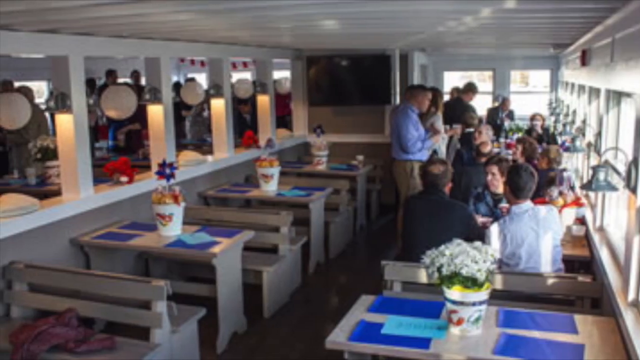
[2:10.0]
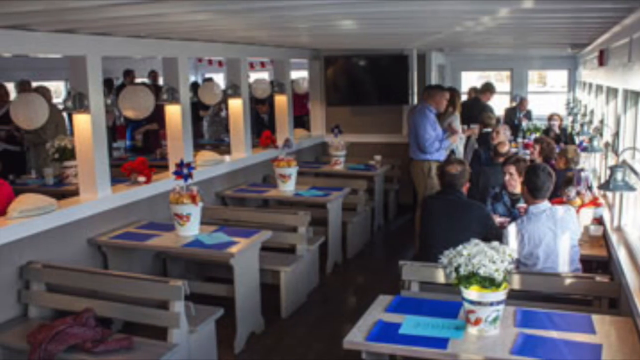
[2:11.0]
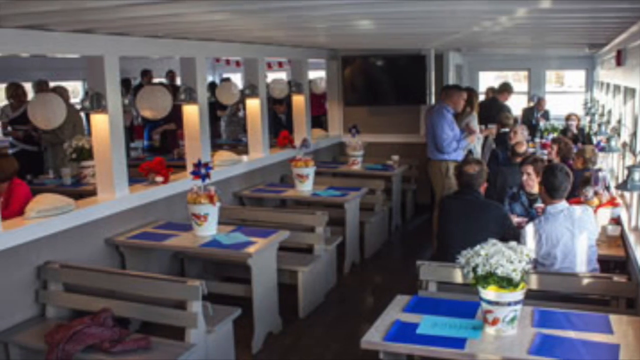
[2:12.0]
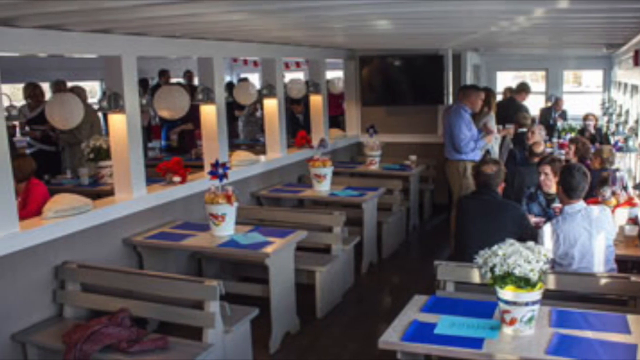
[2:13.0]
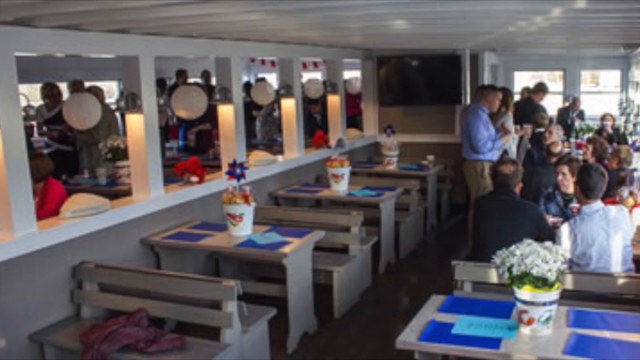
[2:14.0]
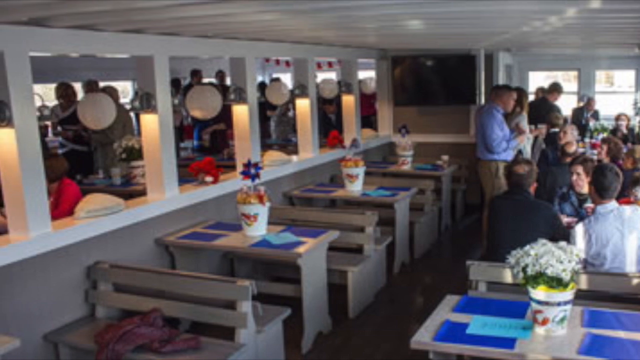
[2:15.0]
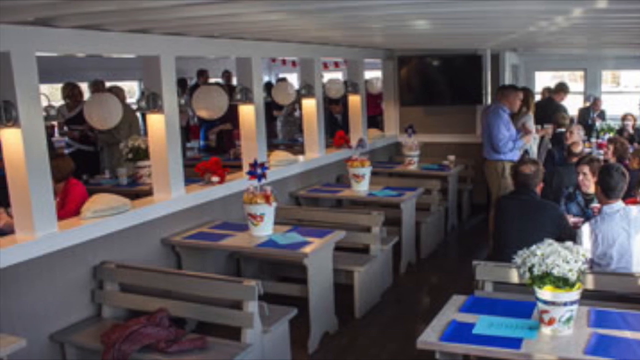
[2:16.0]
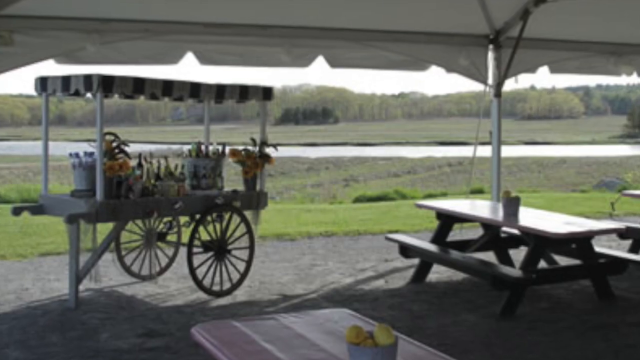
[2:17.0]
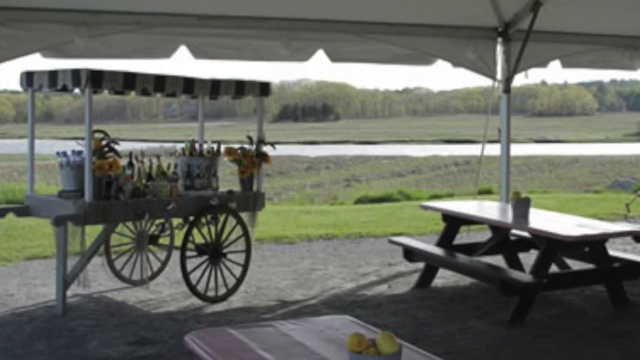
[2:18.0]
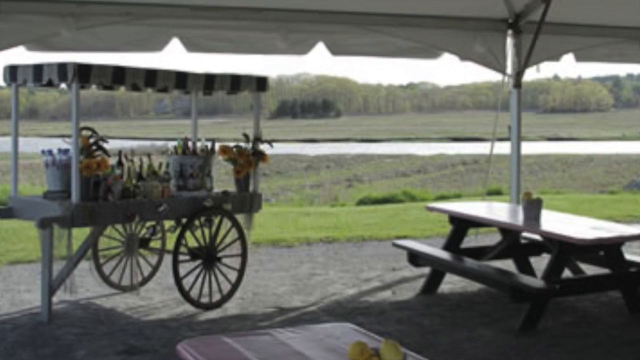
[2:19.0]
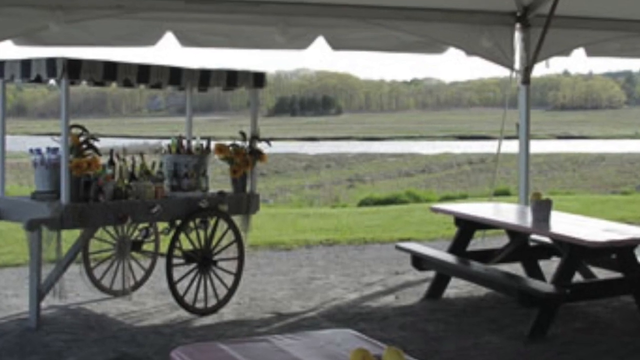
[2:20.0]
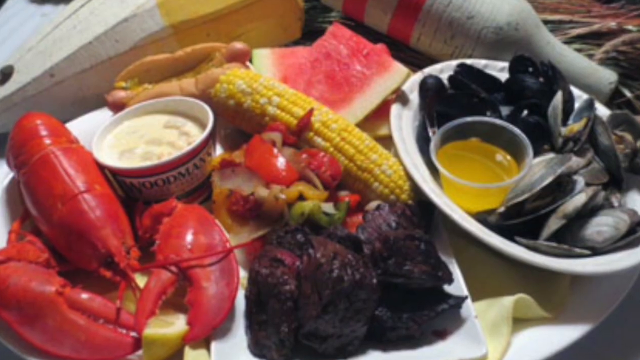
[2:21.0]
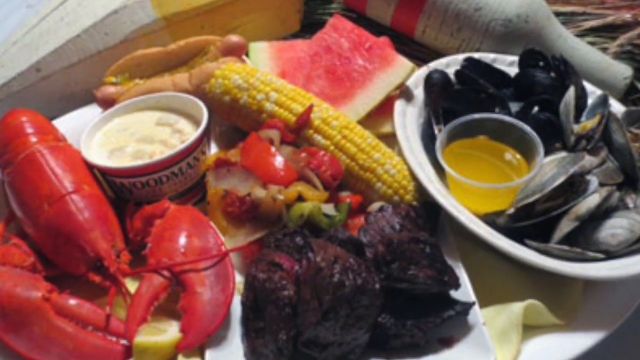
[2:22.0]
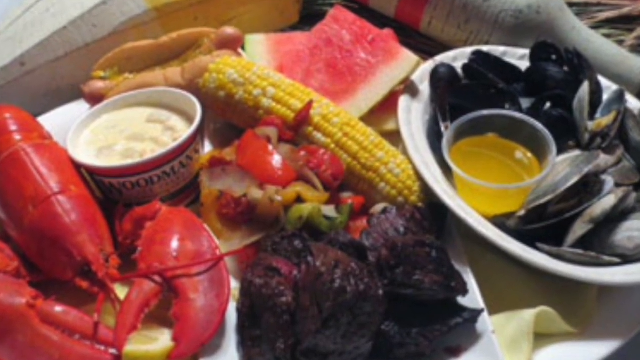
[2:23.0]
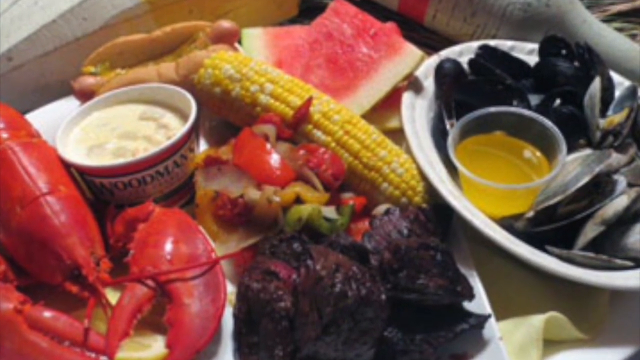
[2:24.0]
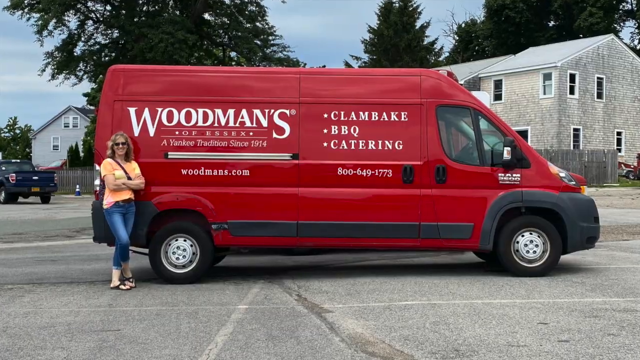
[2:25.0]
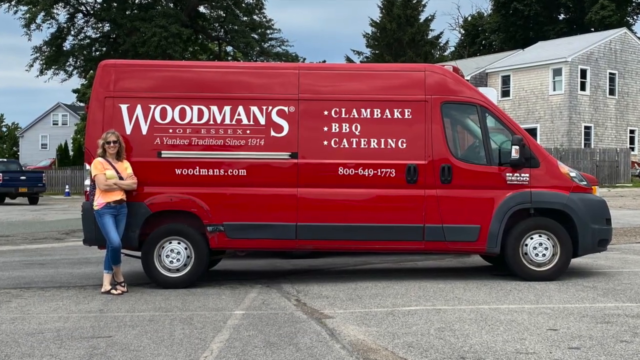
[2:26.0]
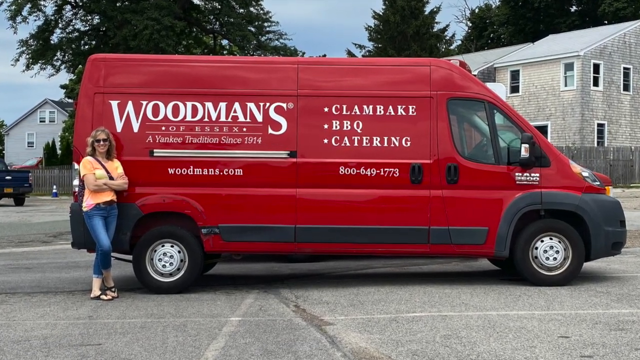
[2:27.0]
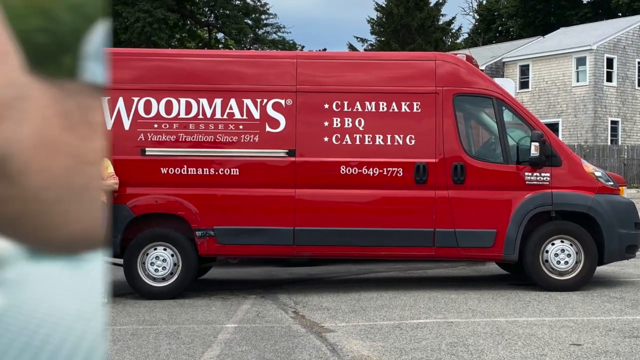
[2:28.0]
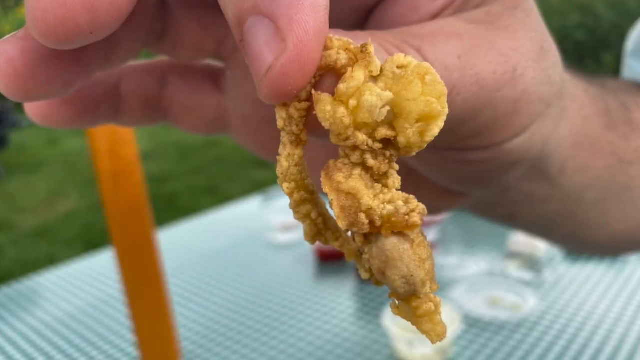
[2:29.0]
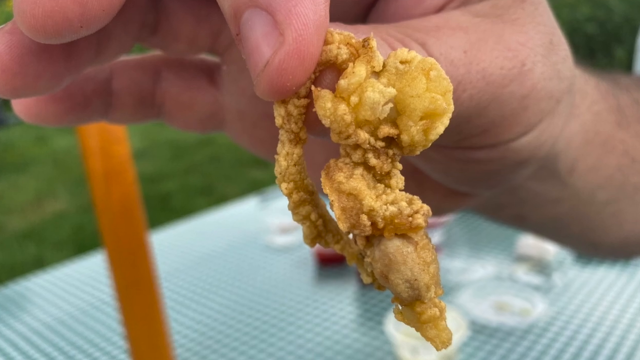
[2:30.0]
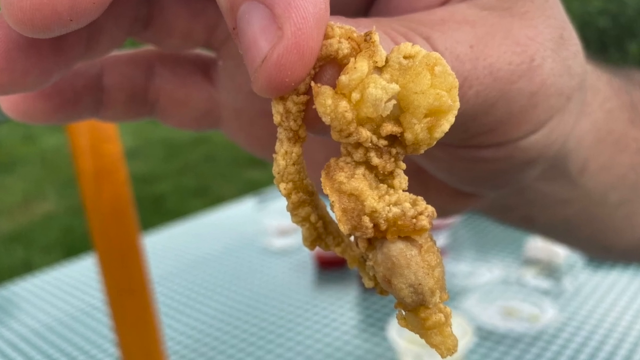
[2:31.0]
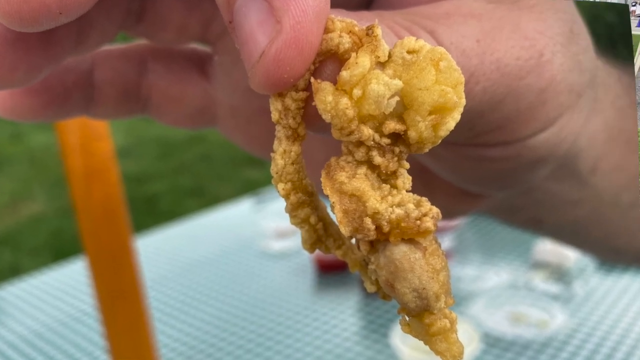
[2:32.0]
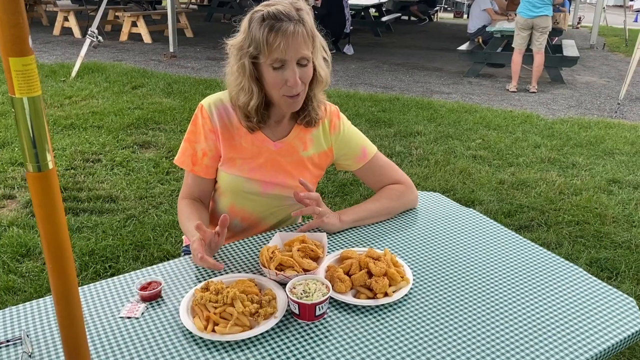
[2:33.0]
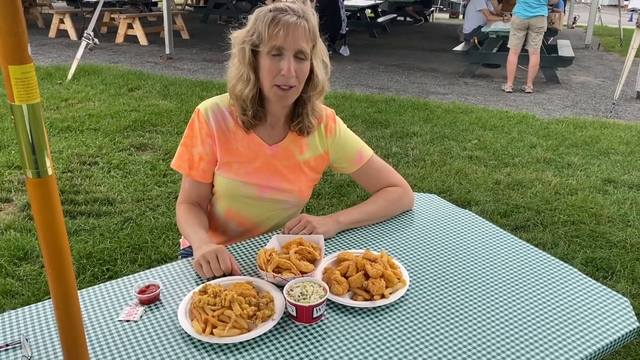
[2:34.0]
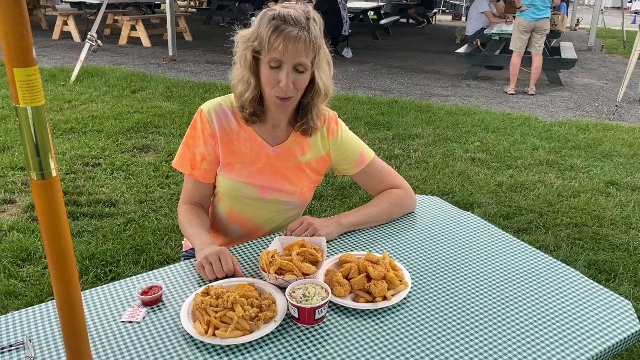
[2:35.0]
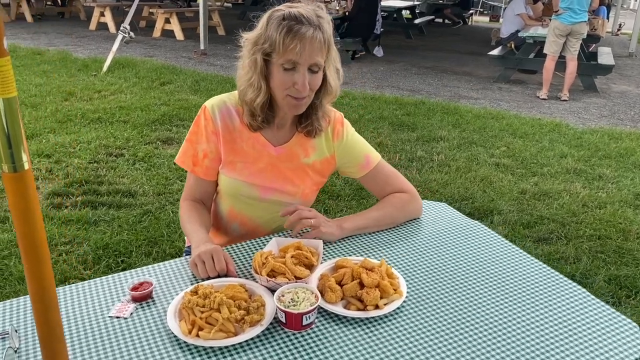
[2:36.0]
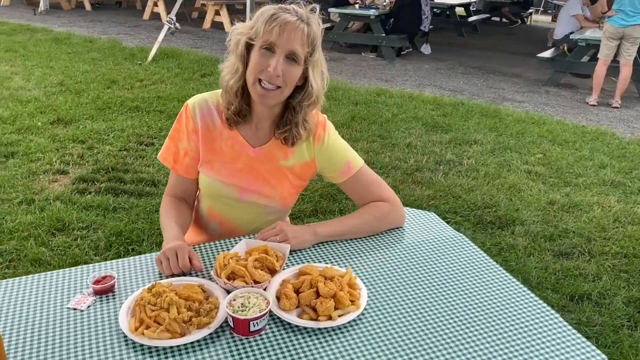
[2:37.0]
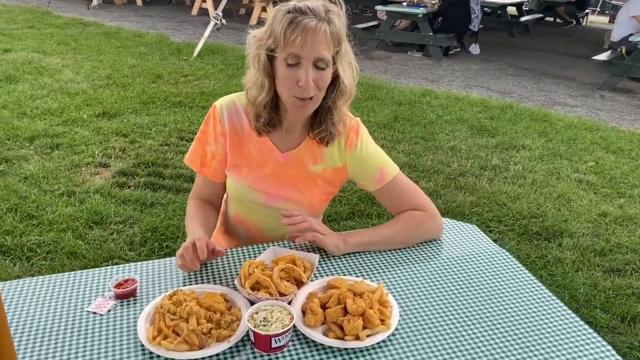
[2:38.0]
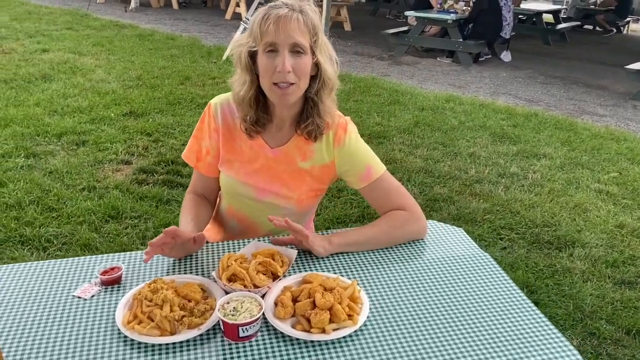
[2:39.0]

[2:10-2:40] What is apparently the inside of the house has wooden benches and tables; it is not particularly spacious and is quite busy. The woodwork is painted whitish, maybe white wood, there are blue placemats, and each table has a bucket of flowers in the centre. People are sitting there, and someone is walking around taking pictures. The camera pans left to show more of the dining room, which looks the same. Next is a picture of an outdoor area under an awning with a cart. Then a picture shows lobsters, sweetcorn, watermelon slices, a paper tub of something white, butter and a hot dog. A Woodman's van follows: a red transit van with white writing, a sign that says "Woodman's Essex", a website and a catering phone number. The woman from the beginning of the video stands at the back end of the van with her arms folded, smiling. The camera zooms in, then a picture shows her hand holding something deep-fried. Back at the table with the three plates of food, the woman, no longer wearing sunglasses, sits with the plates in front of her and talks to the camera as the camera pans around her.